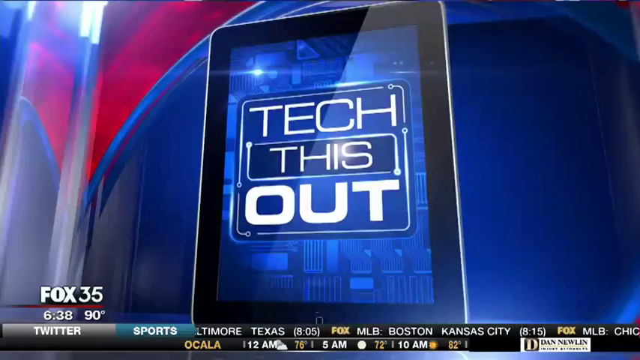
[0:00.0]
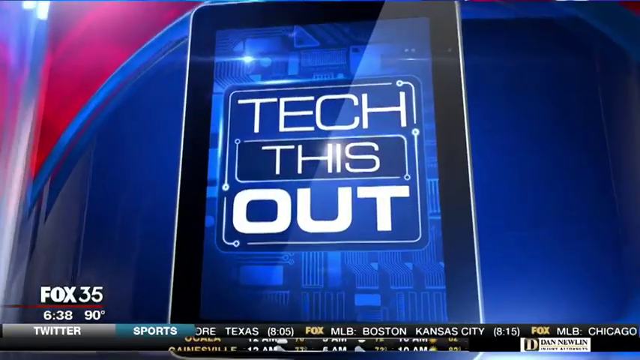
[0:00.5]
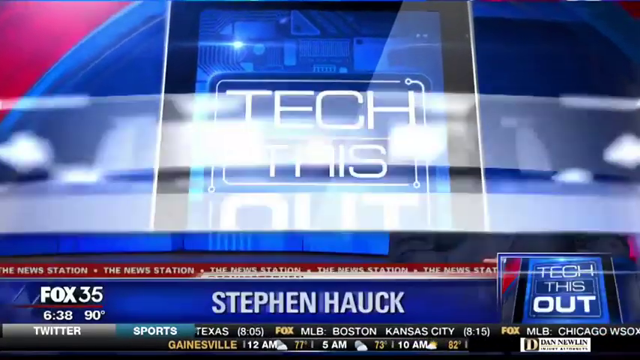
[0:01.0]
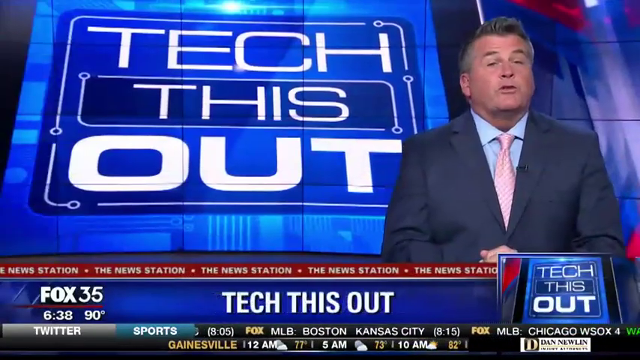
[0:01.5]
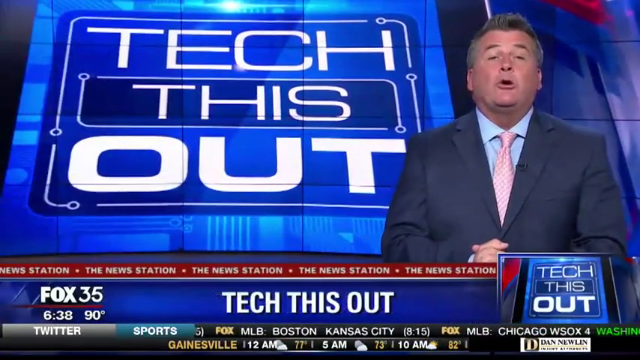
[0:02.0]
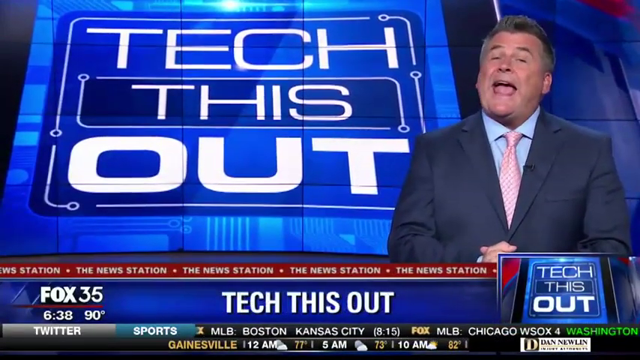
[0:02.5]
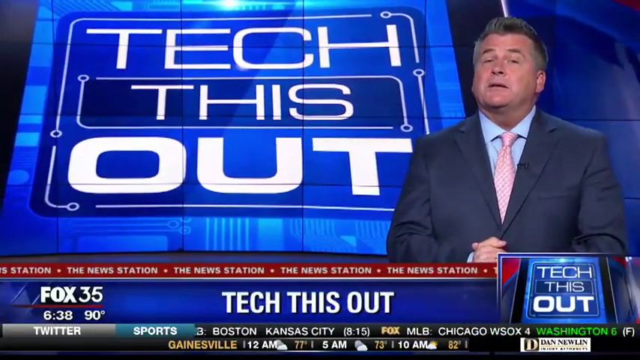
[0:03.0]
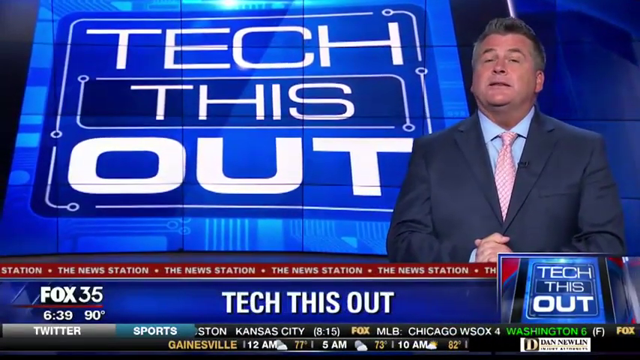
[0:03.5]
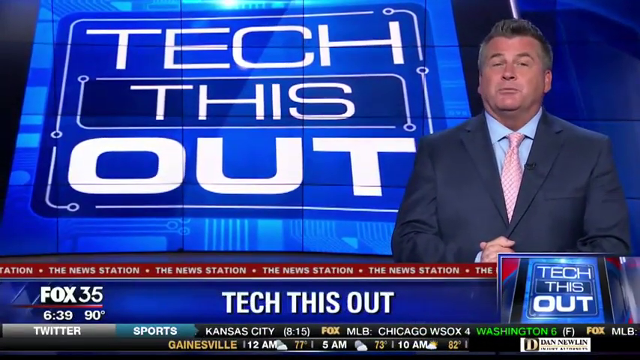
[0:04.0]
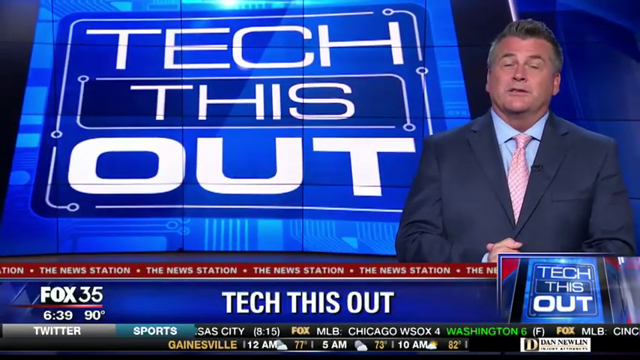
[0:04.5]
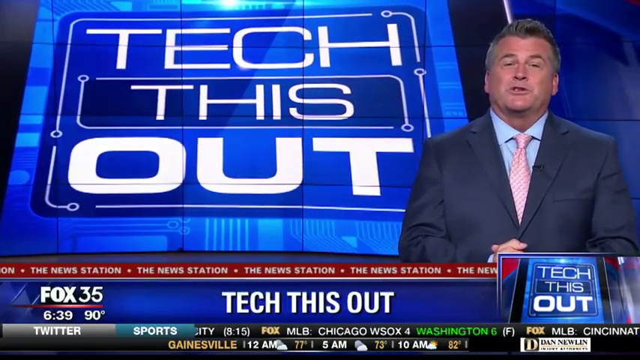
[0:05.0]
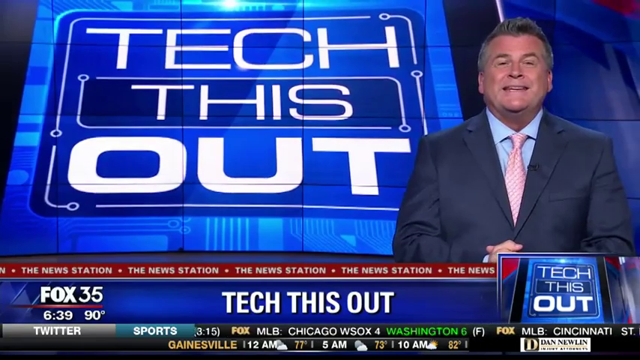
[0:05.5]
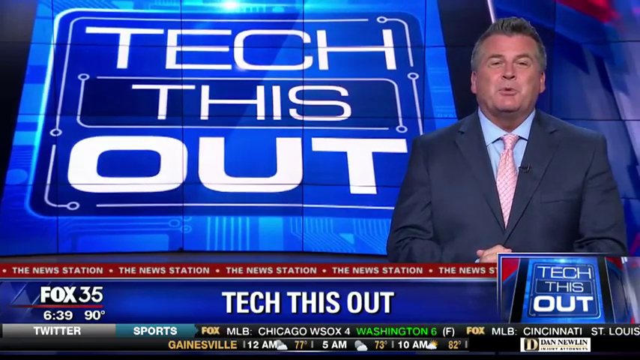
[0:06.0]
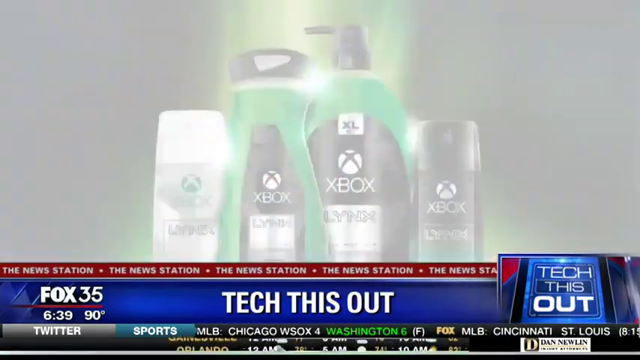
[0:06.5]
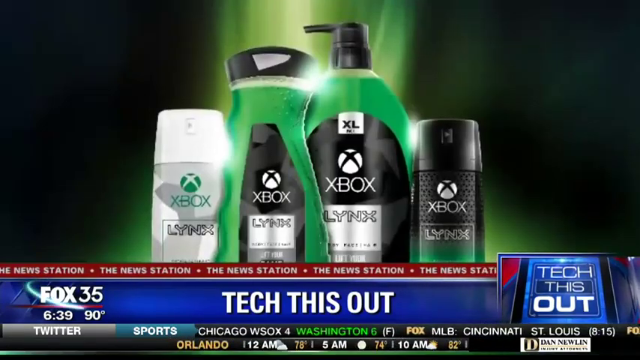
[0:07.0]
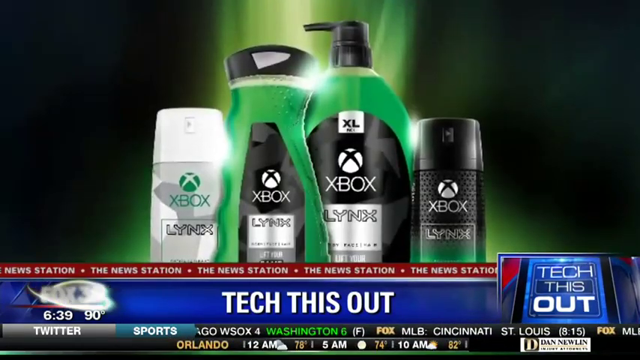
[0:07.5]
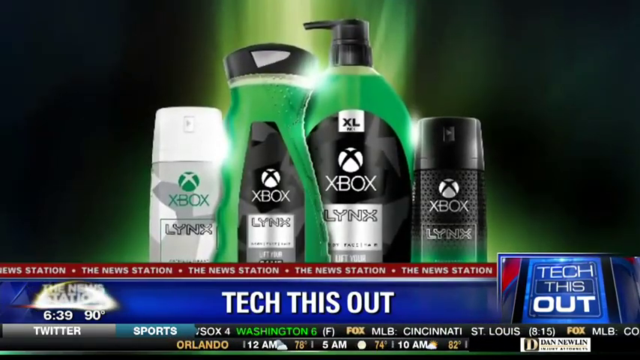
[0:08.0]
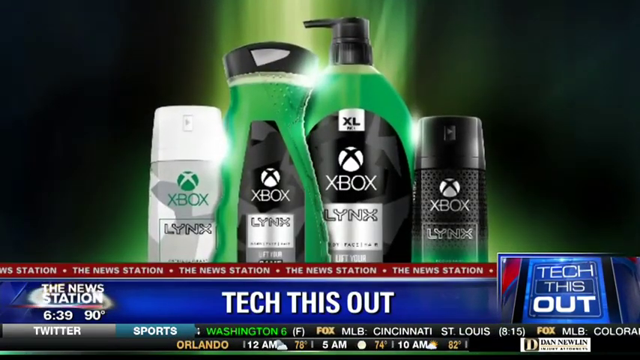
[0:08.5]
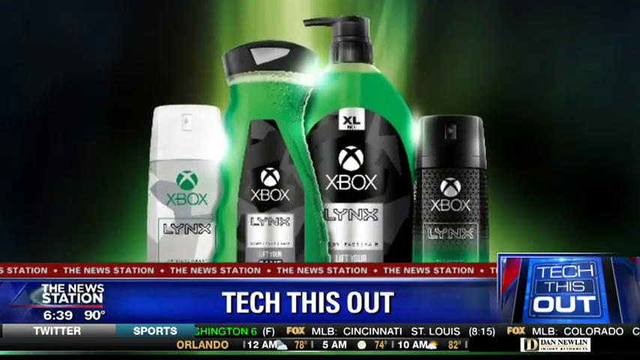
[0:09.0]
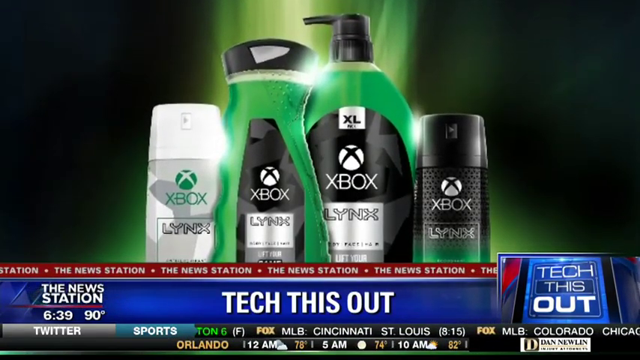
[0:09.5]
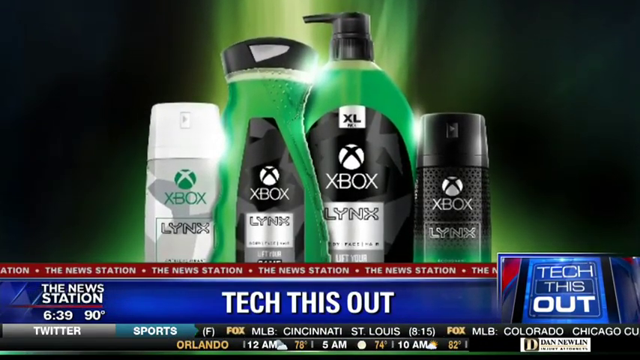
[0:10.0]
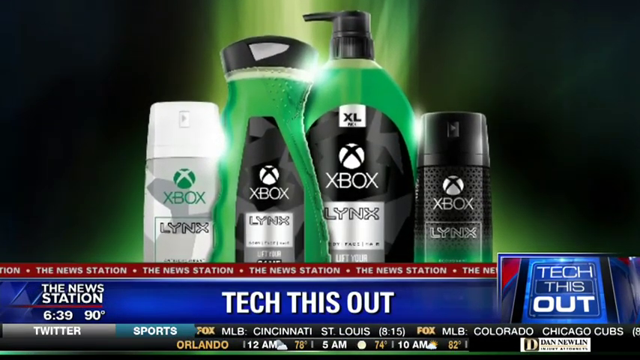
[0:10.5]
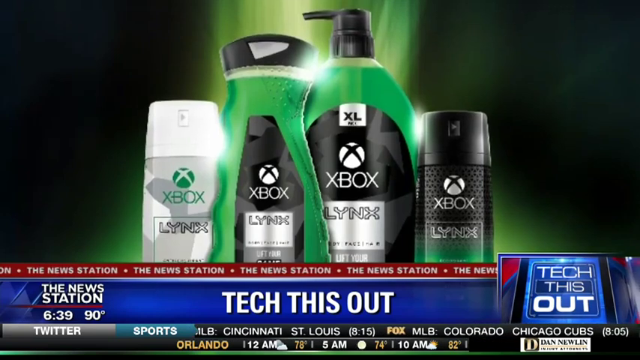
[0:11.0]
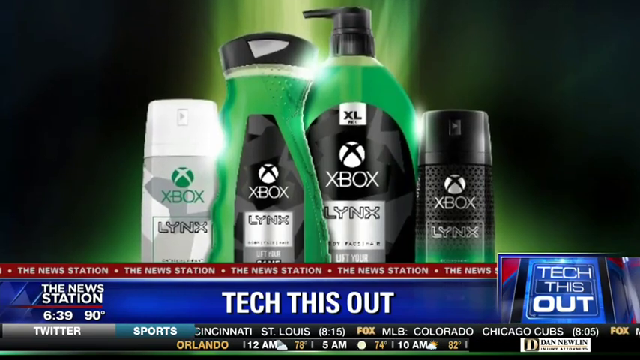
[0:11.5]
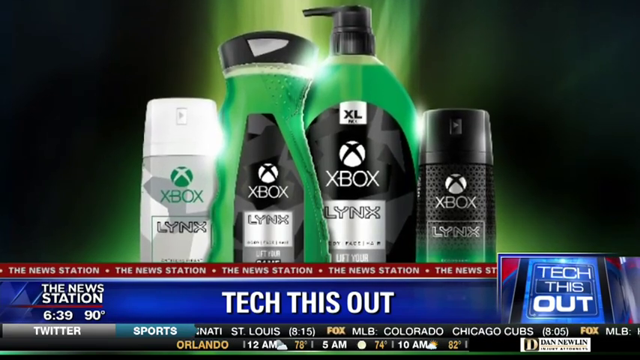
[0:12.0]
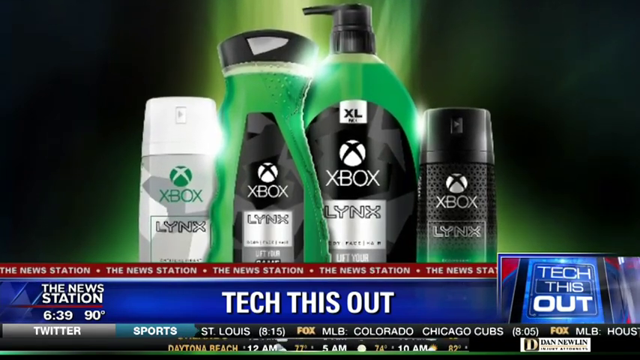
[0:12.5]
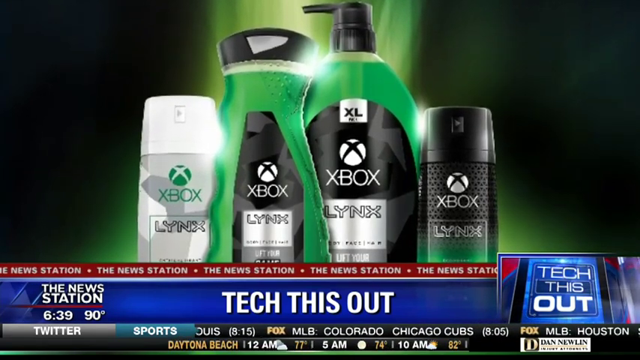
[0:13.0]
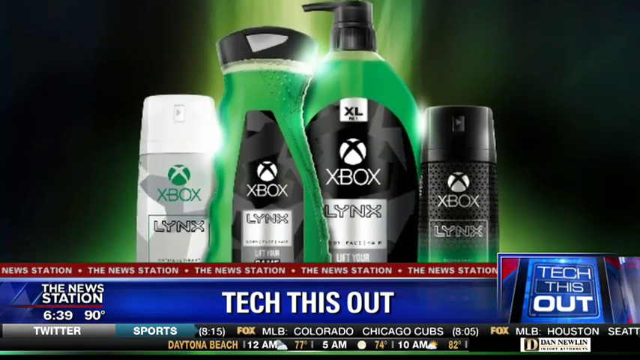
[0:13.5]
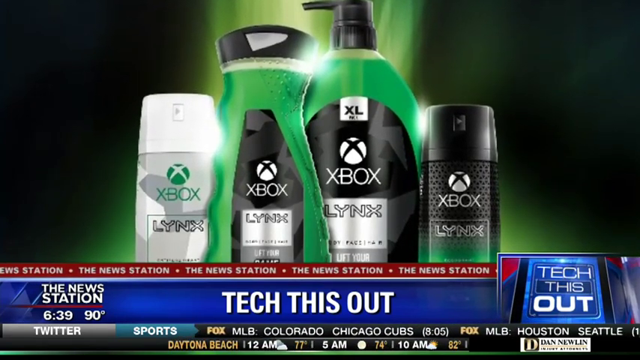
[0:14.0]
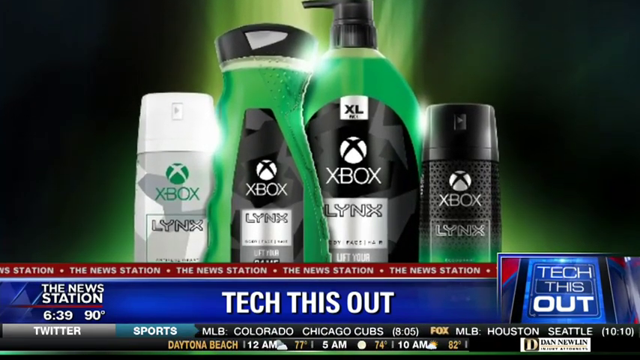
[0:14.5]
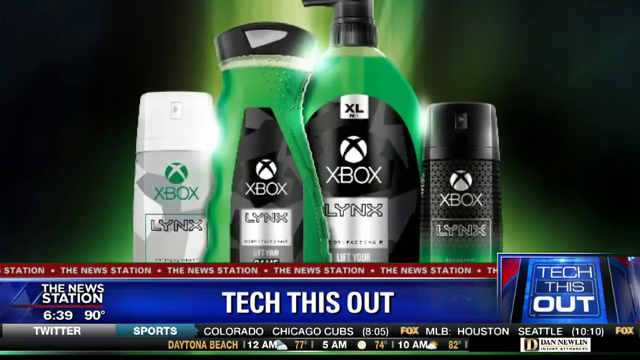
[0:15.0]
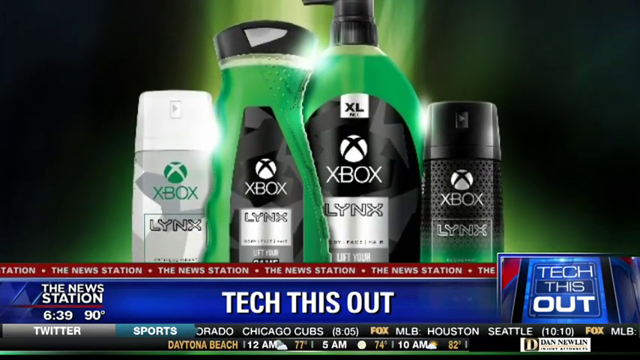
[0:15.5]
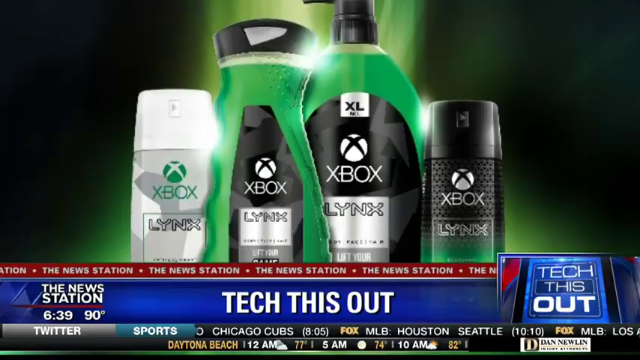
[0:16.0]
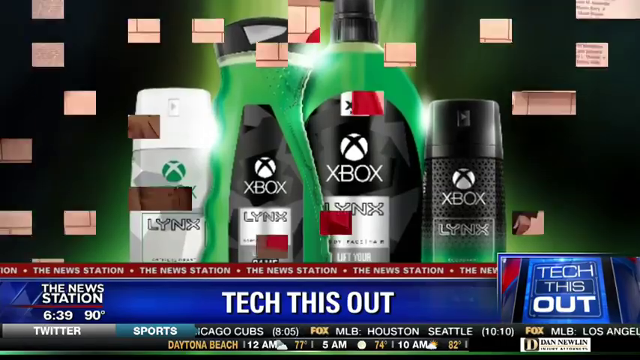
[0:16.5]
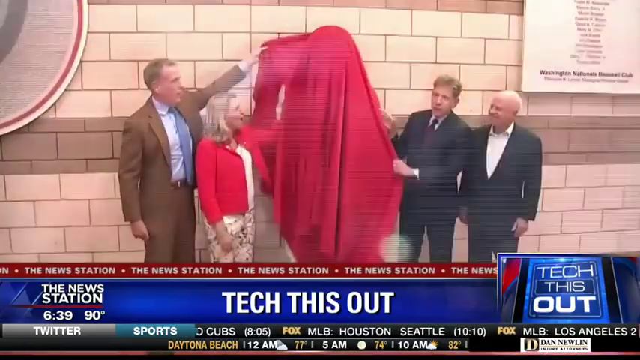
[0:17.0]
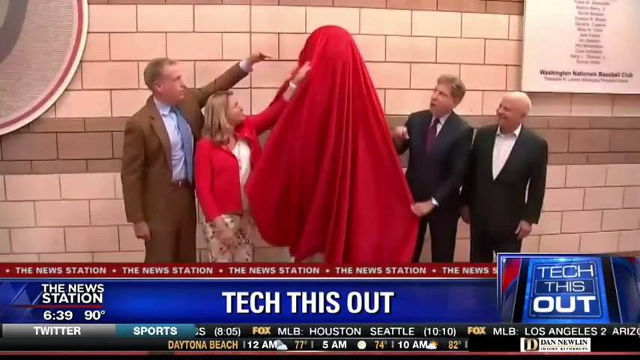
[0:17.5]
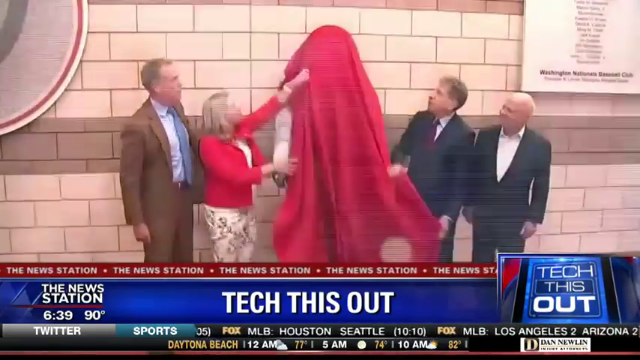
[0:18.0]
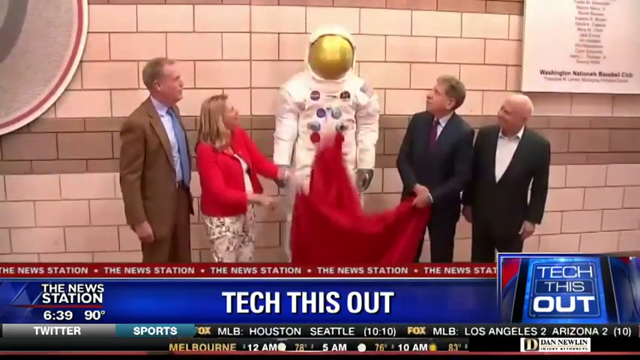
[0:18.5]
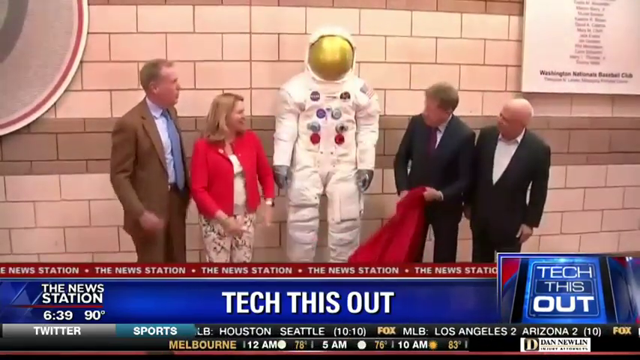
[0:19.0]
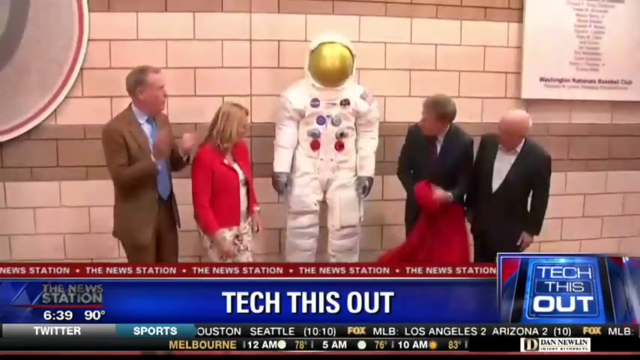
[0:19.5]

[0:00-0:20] The broadcast is on Fox channel 35, in a new segment called Tech This Out. A middle-aged news anchor with greying hair presents it, wearing a smart grey suit, a light blue shirt and a pink tie. The time is 6.39 and it is 90 degrees outside. Florida weather forecasts appear: Gainesville will be 77 degrees at midnight and will hit 82 by 10am. Baseball scores are also shown: Washington have defeated the Chicago White Sox 6 runs to 4; Cincinnati and St. Louis will play at 8.15 this evening; the Chicago Cubs and Colorado start at 8.05; Houston–Seattle begins at 10.10; and Los Angeles and Arizona are tied at two runs apiece in the 10th inning. The segment looks at a collaboration between Xbox and Lynx, the male deodorants firm.